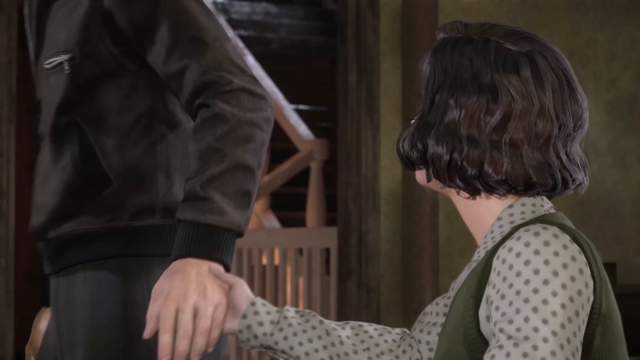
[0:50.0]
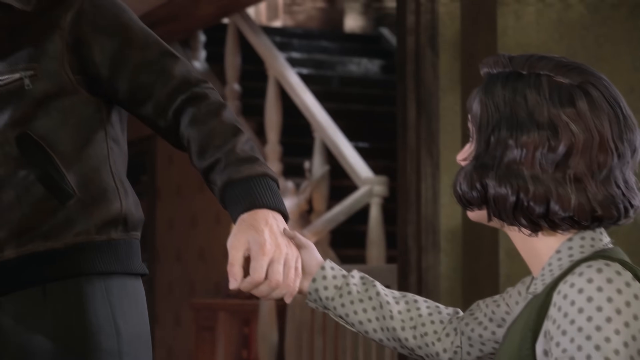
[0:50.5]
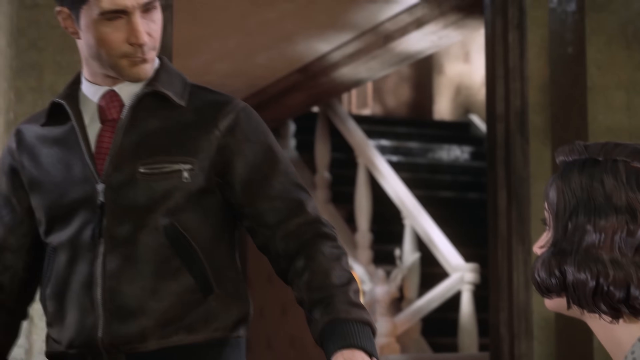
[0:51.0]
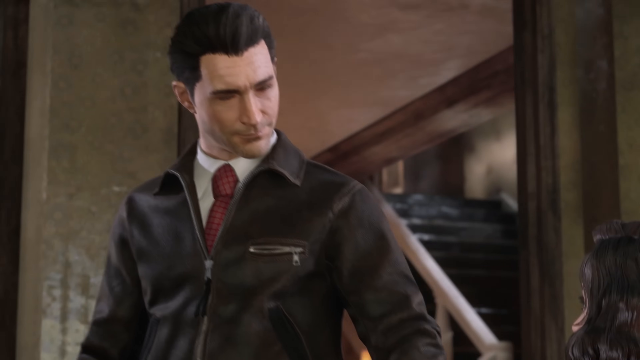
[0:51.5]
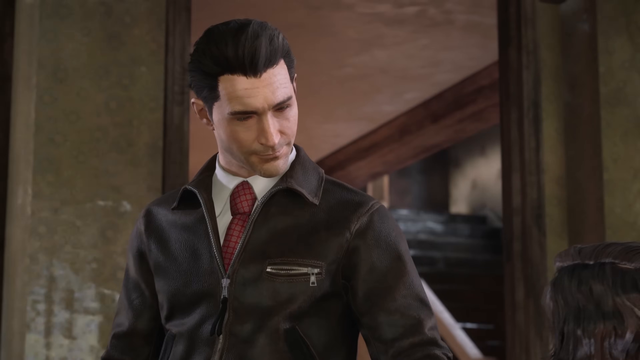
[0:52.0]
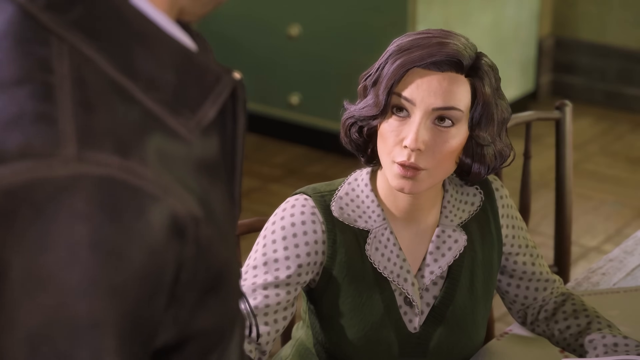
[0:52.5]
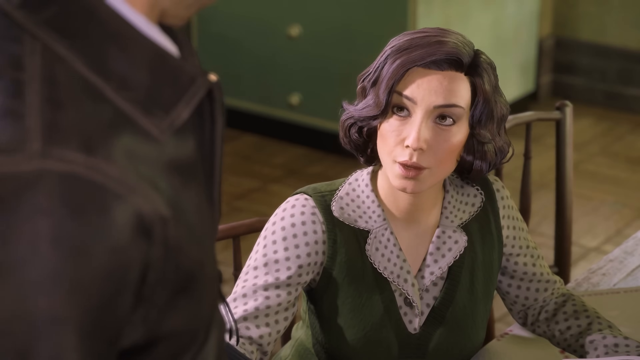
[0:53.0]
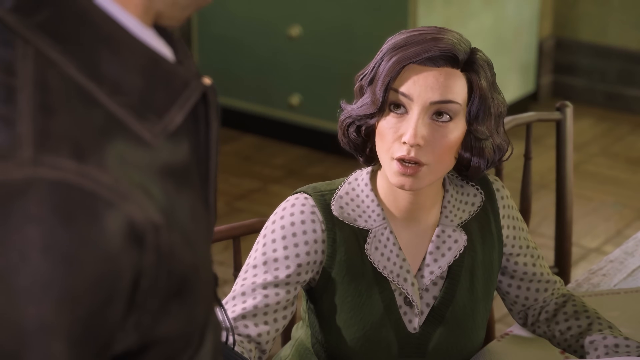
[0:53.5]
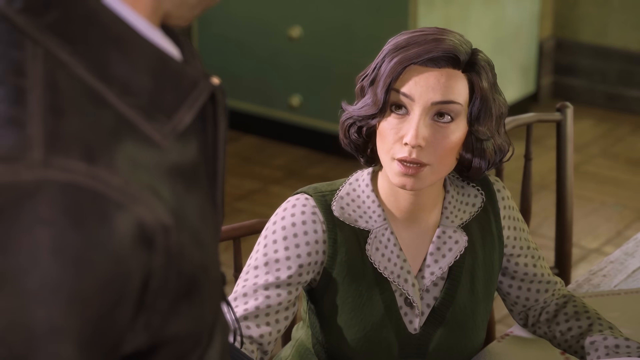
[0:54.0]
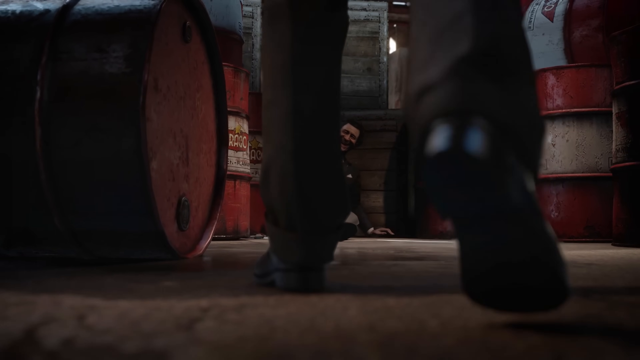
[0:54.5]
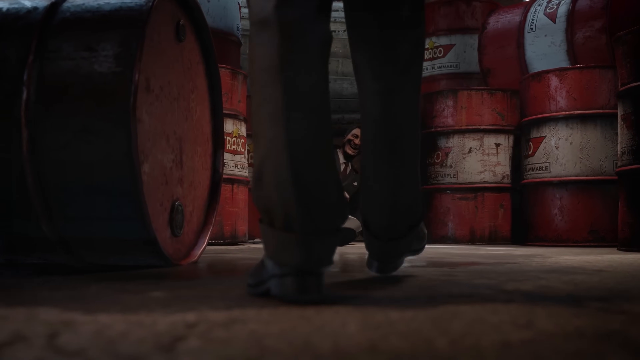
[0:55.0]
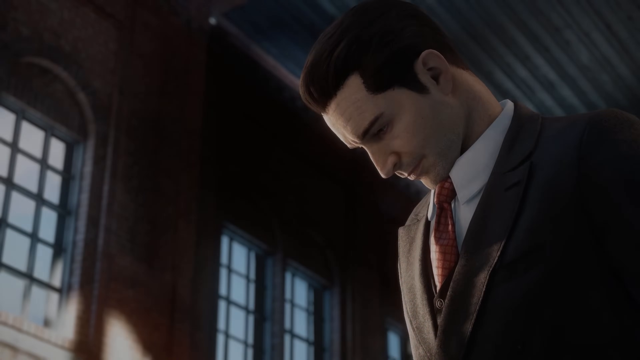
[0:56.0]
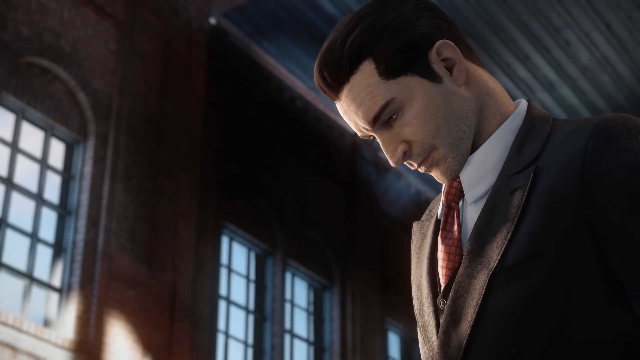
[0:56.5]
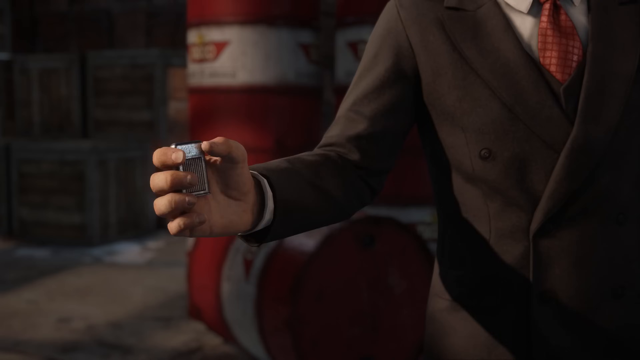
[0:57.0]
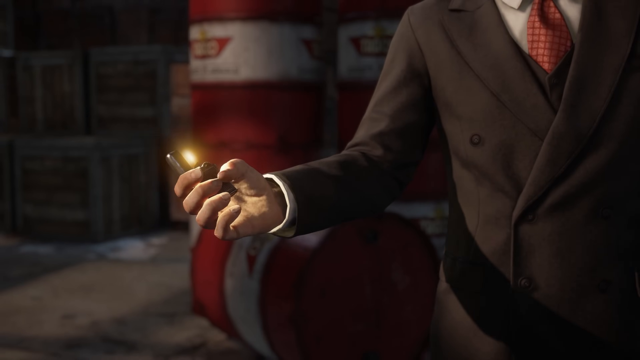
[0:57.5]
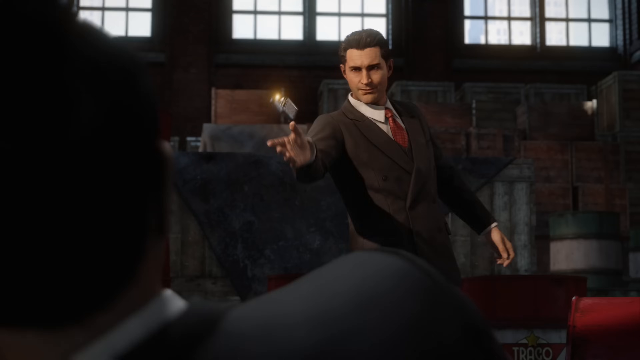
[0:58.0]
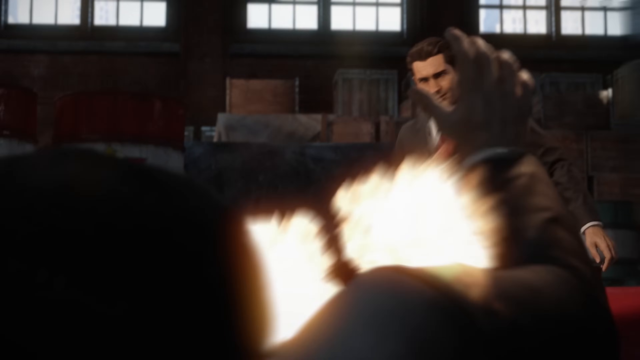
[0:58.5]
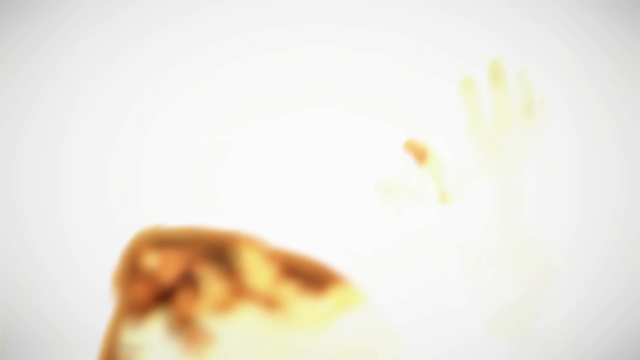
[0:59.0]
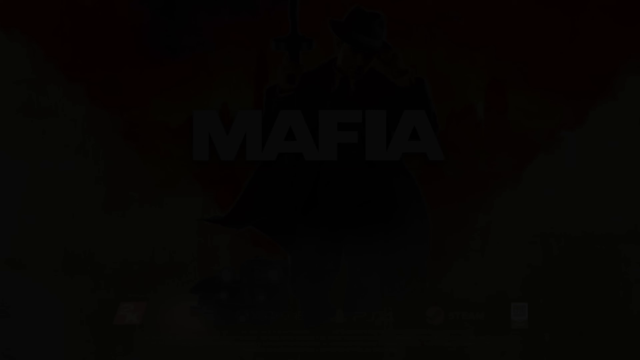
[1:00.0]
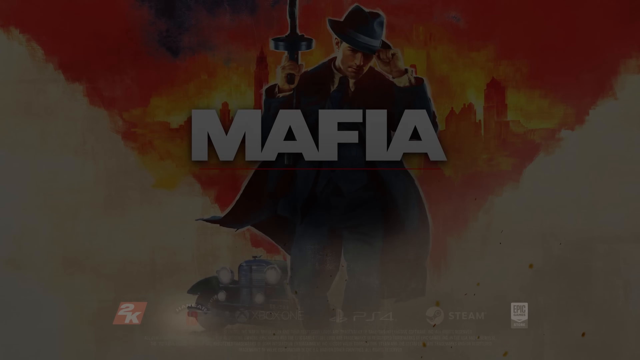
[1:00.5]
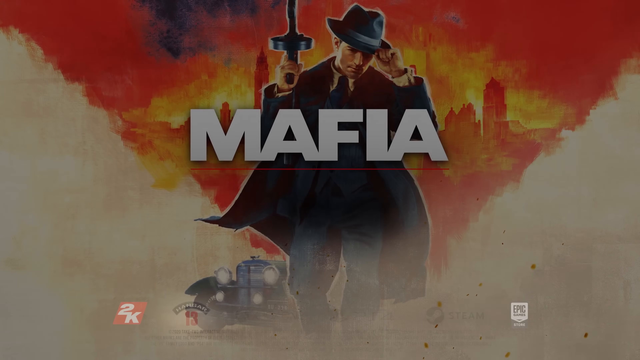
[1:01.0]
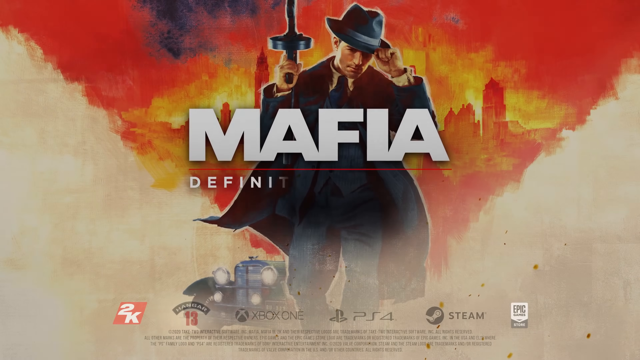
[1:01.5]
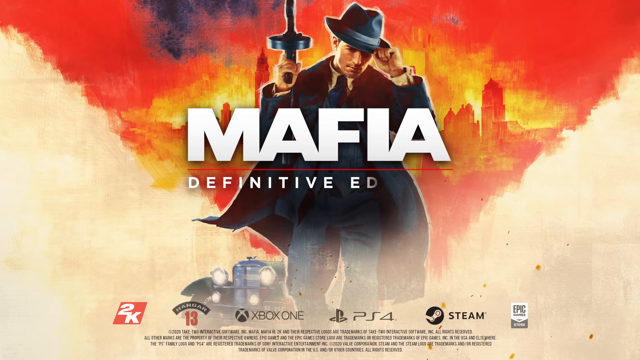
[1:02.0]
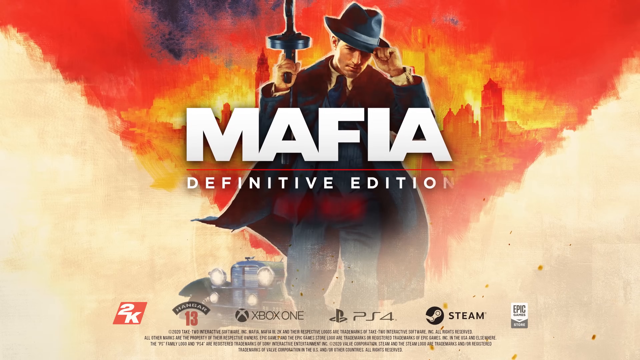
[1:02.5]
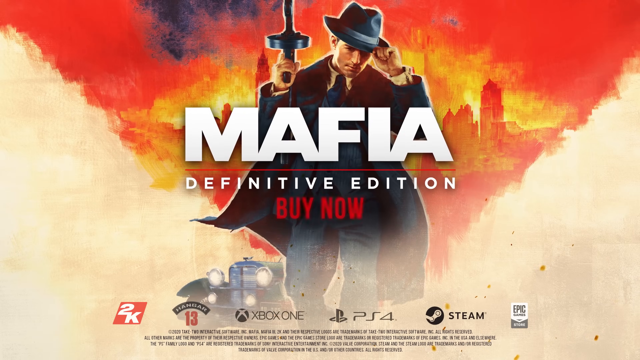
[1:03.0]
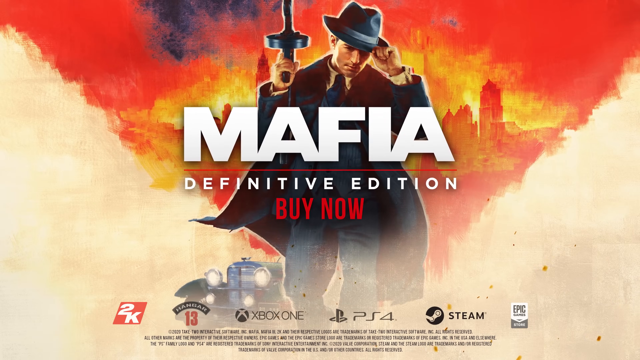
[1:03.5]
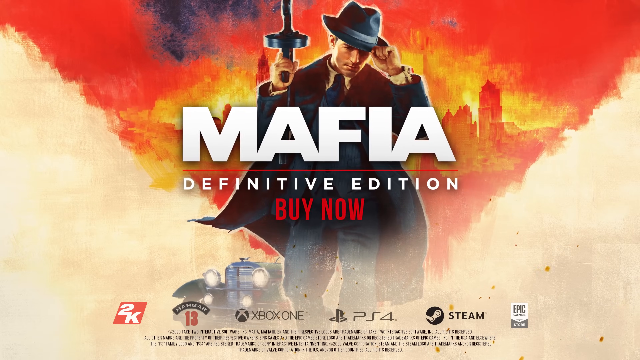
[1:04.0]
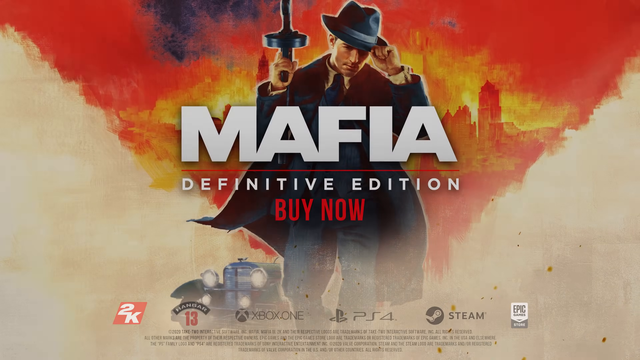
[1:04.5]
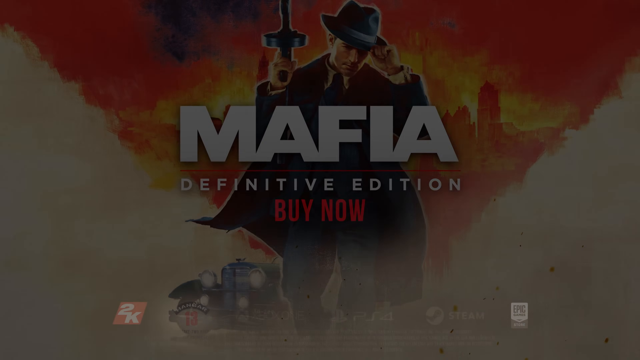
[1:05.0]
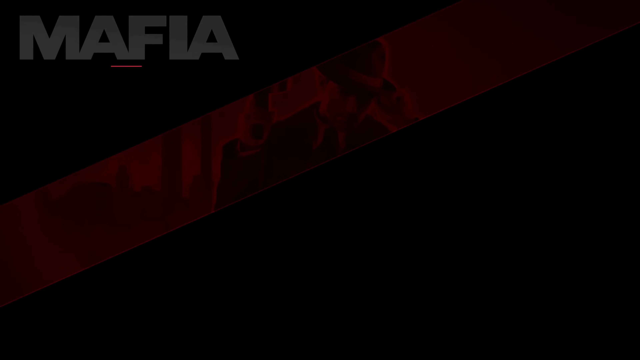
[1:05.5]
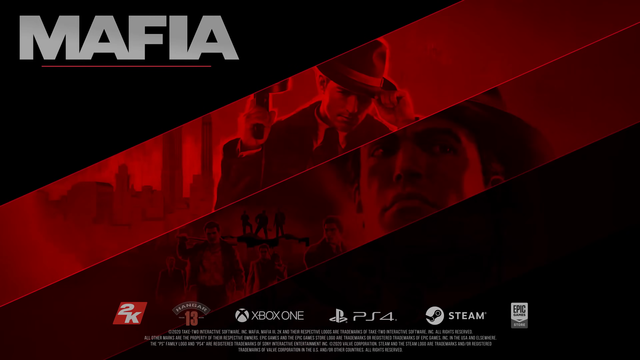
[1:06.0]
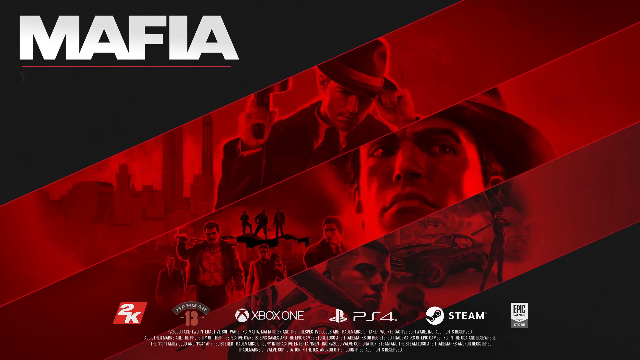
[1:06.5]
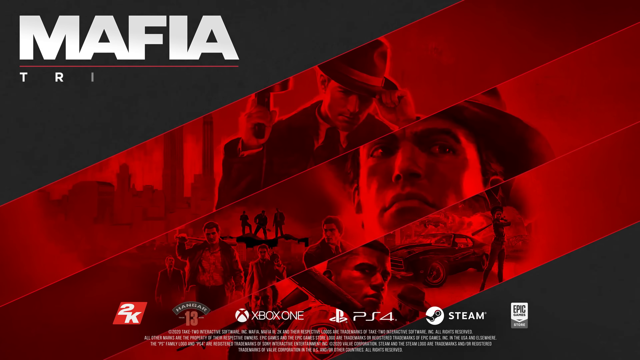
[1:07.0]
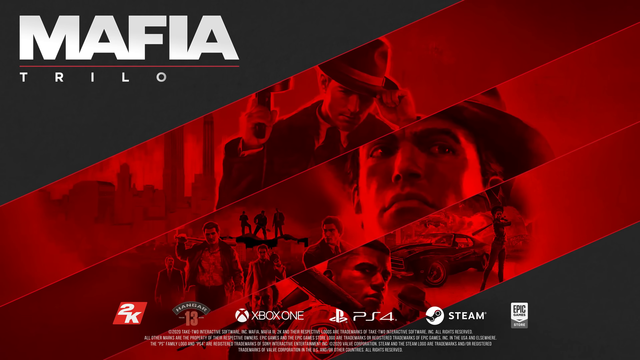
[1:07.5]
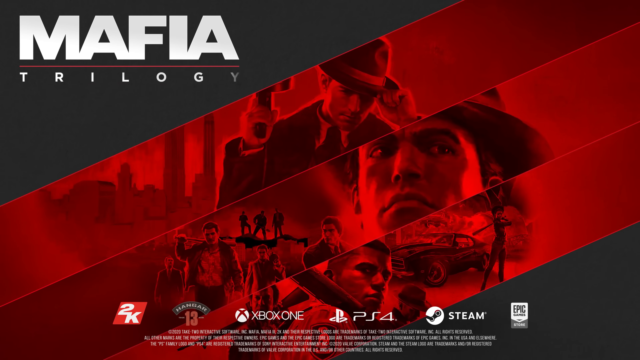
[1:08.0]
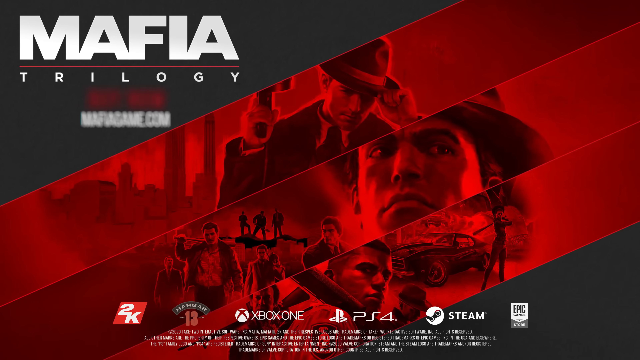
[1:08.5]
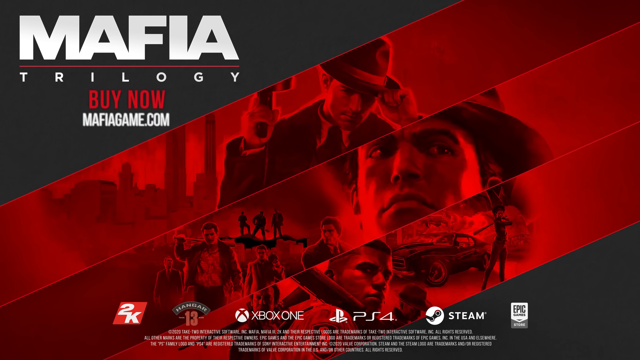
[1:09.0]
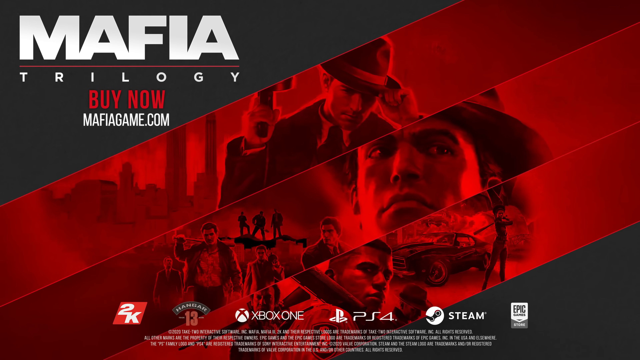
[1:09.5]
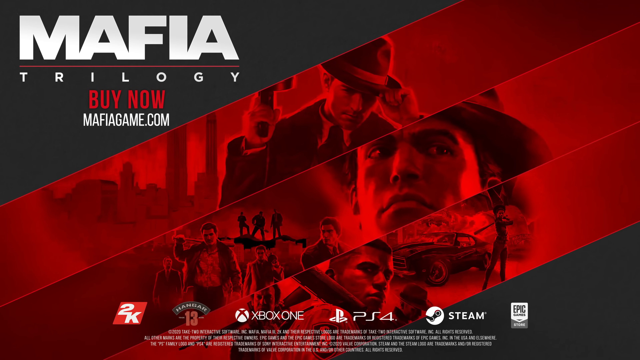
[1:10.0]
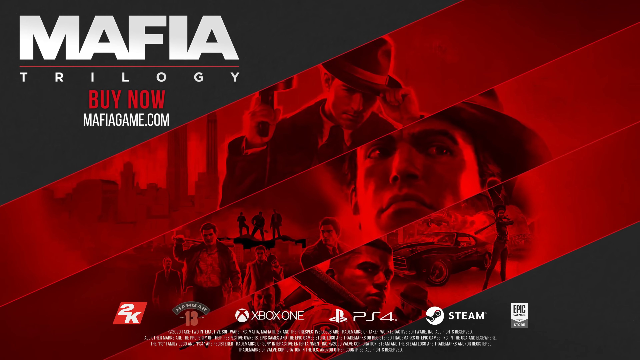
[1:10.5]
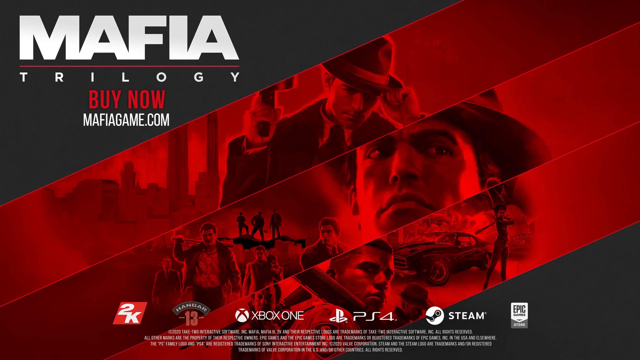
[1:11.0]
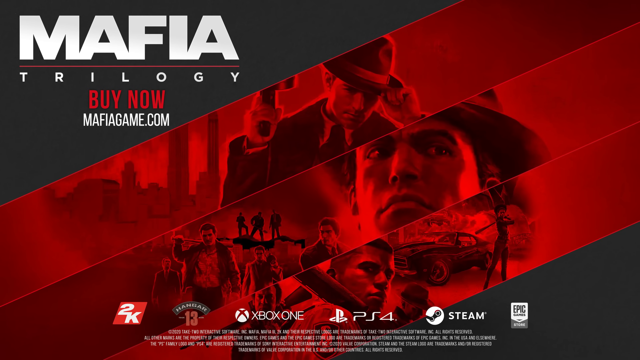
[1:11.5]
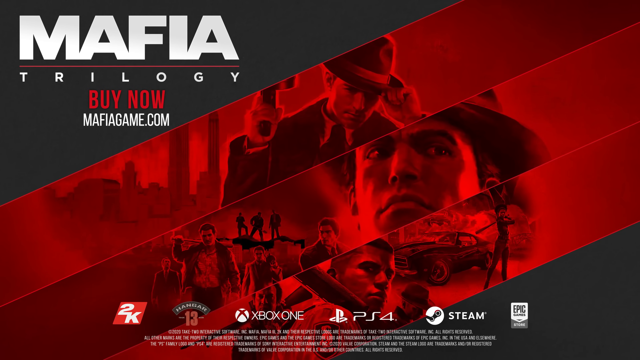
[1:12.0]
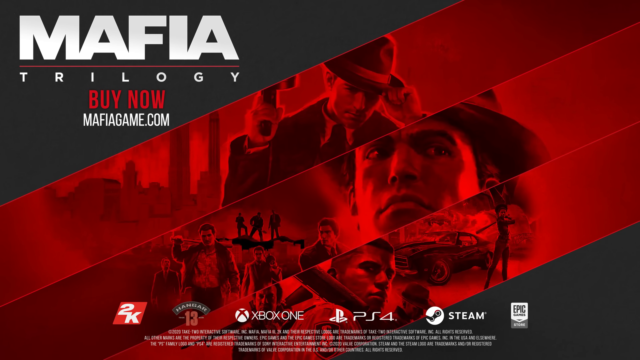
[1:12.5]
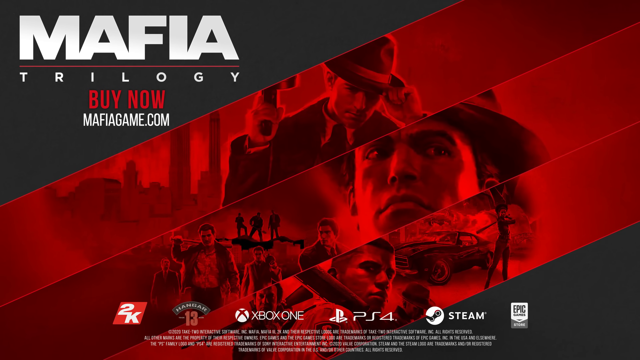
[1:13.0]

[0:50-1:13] A young woman with chin-length brown hair sits at a table near the bottom of a flight of stairs, holding out her right hand to reach the hand of a man wearing a jacket and a tie. They briefly have a conversation, with the view focusing in on the woman's face. Next, a man's legs are shown as he walks across a floor. In the distance a man sits on the floor laughing, surrounded by red kegs or barrels. A man in a suit and a red tie has just lit a lighter and throws it in the direction of the man on the floor, and the building is instantly engulfed in flames. The title sequence appears: a man wearing a long coat, a suit and tie and a black hat holds the brim of the hat with his left hand and a weapon in his right hand. He is surrounded by some buildings, a car and lots of flames against a very yellow and white background. In the center of the screen the logo reads "Mafia Definitive Edition buy now", and along the bottom of the screen are logos including 2K, Hangar 13, Xbox One, PS4, Steam and Epic Games. The final image is a black and red screen with three red stripes running diagonally across the center, each showing a different image from the game. In the top left-hand corner the logo reads "Mafia Trilogy, buy now, mafiagame.com", and along the bottom are the same logos as on the previous screen.